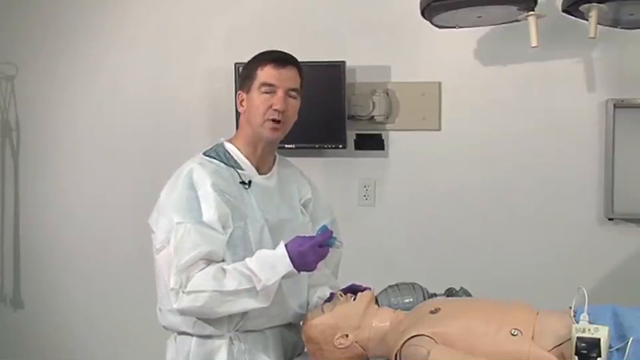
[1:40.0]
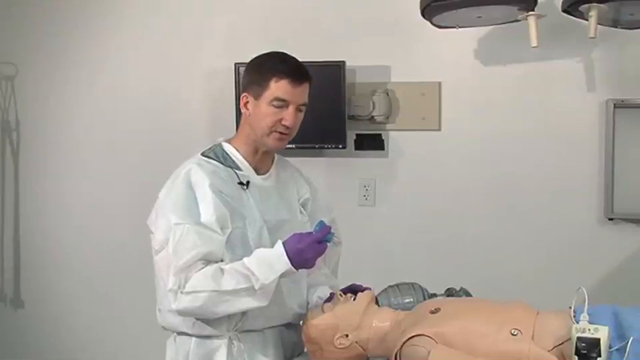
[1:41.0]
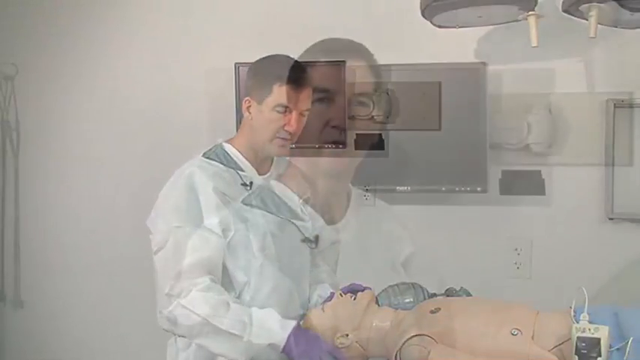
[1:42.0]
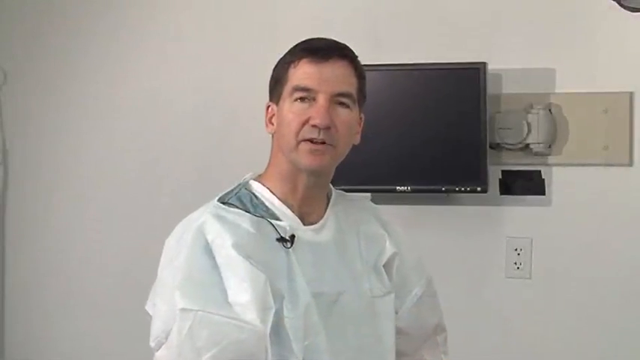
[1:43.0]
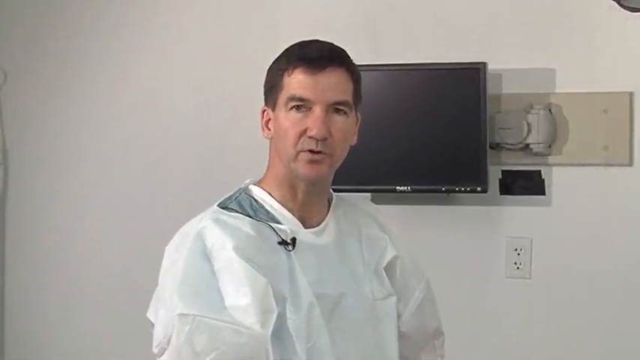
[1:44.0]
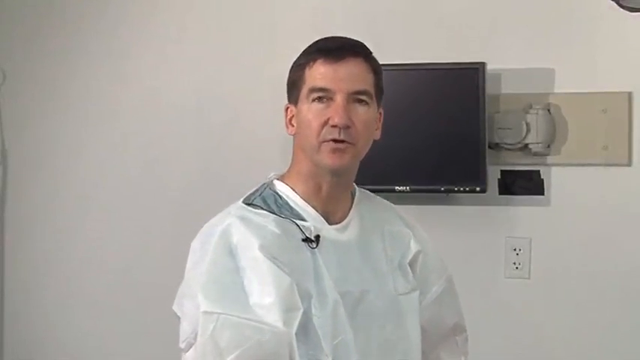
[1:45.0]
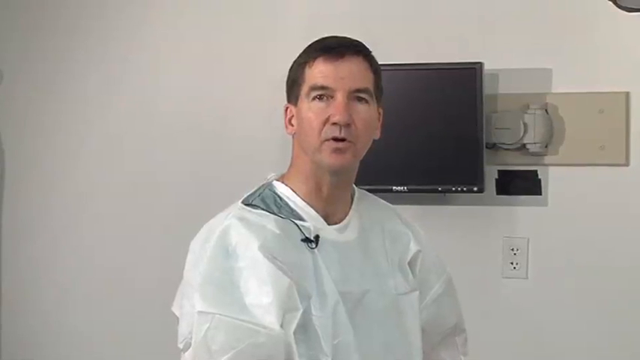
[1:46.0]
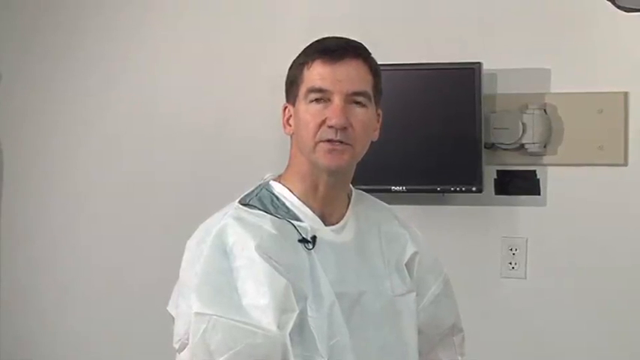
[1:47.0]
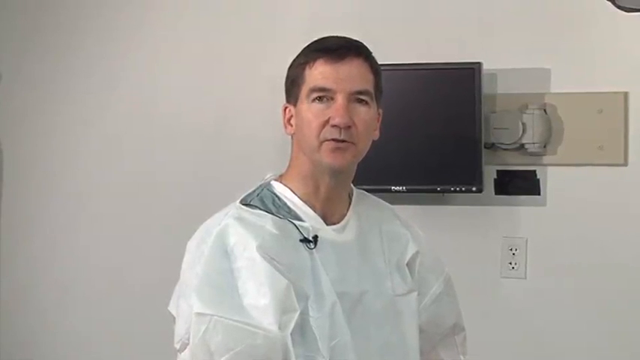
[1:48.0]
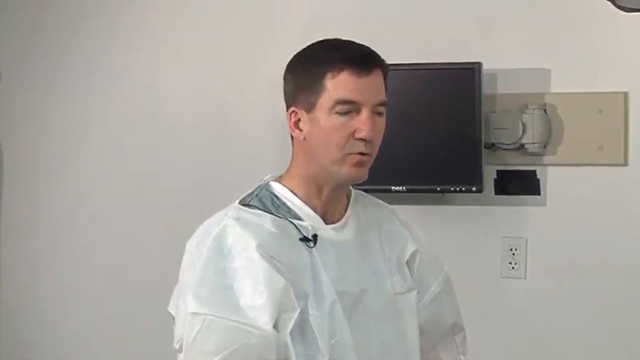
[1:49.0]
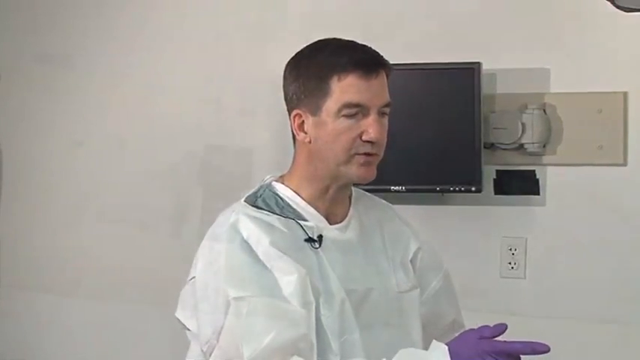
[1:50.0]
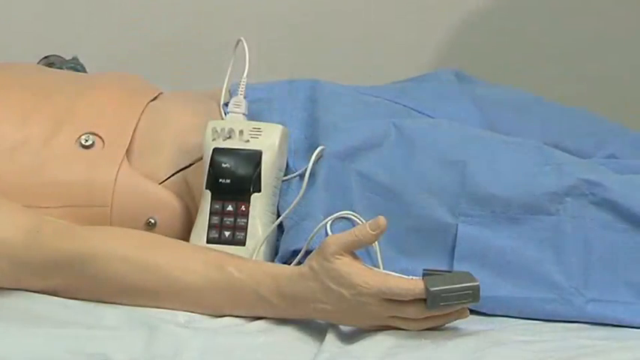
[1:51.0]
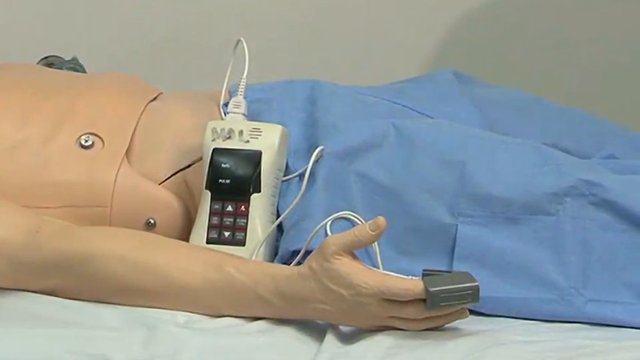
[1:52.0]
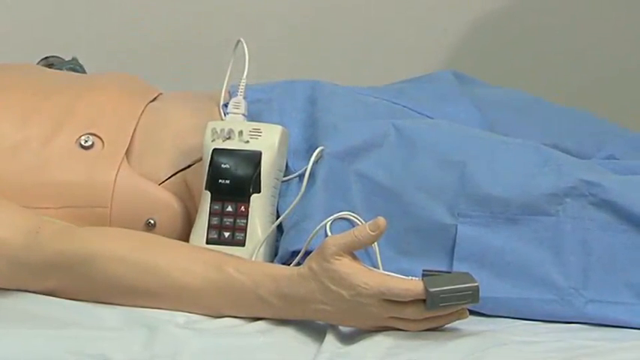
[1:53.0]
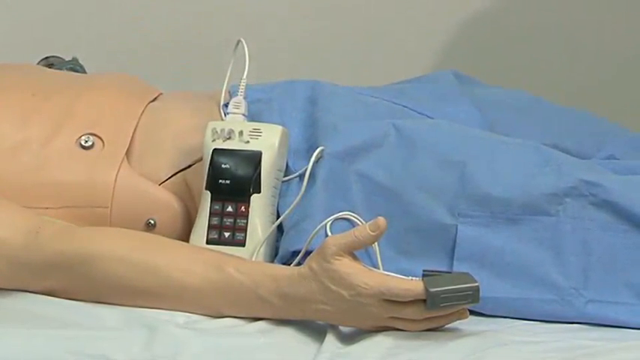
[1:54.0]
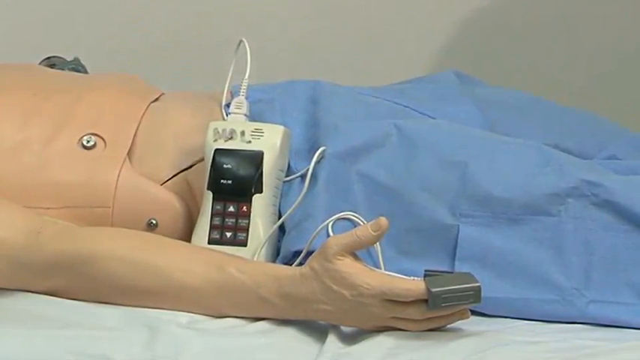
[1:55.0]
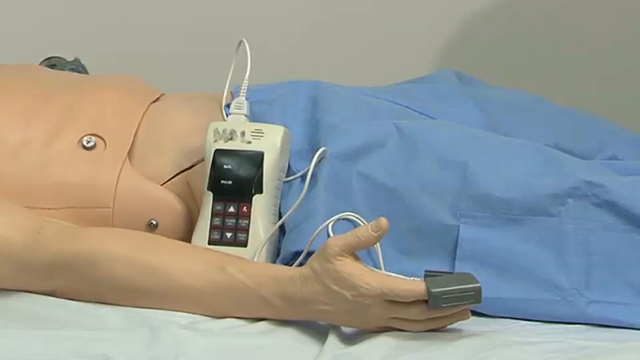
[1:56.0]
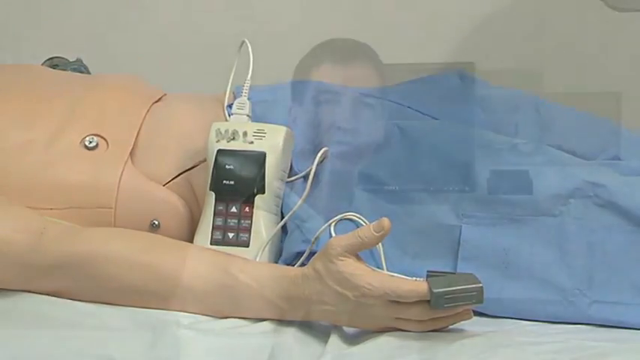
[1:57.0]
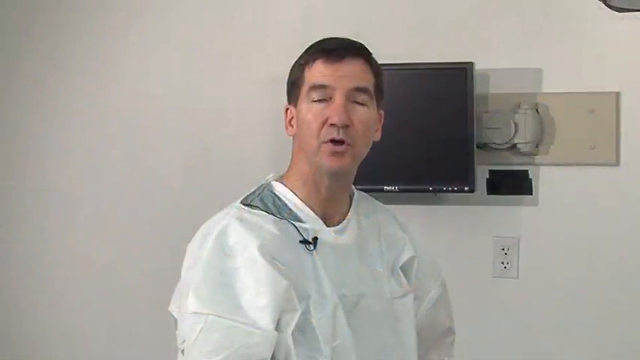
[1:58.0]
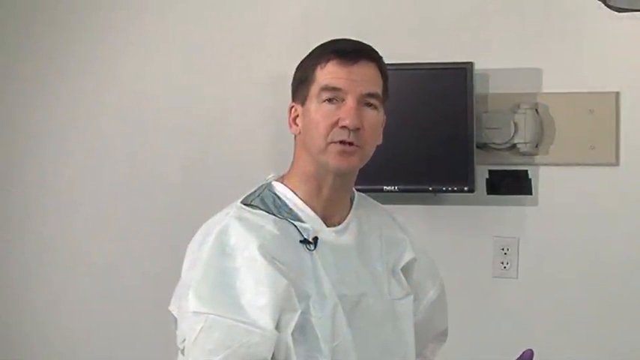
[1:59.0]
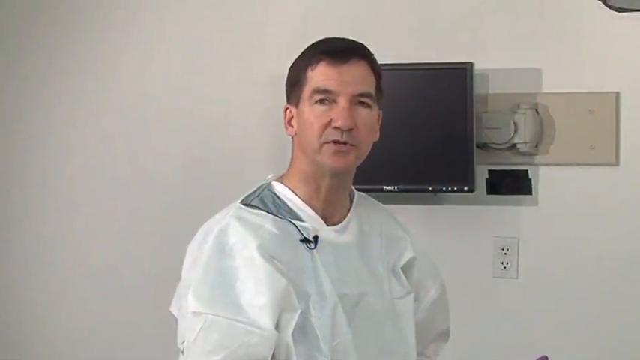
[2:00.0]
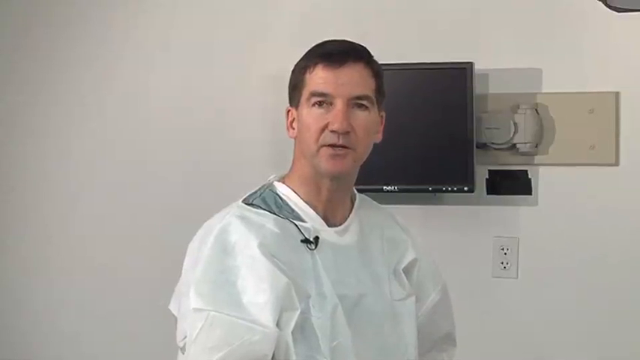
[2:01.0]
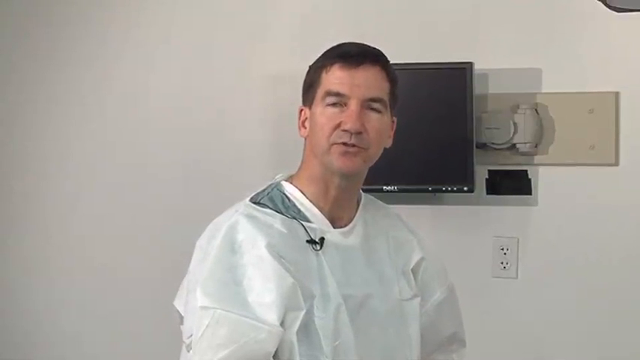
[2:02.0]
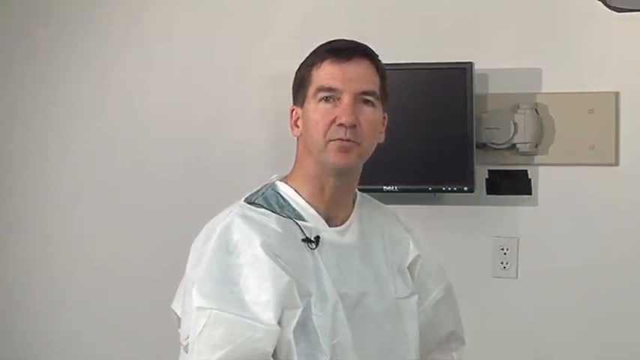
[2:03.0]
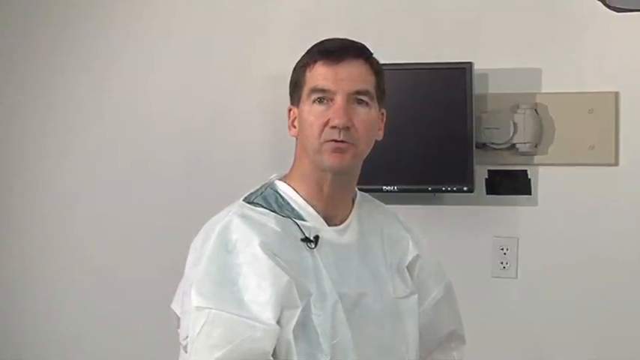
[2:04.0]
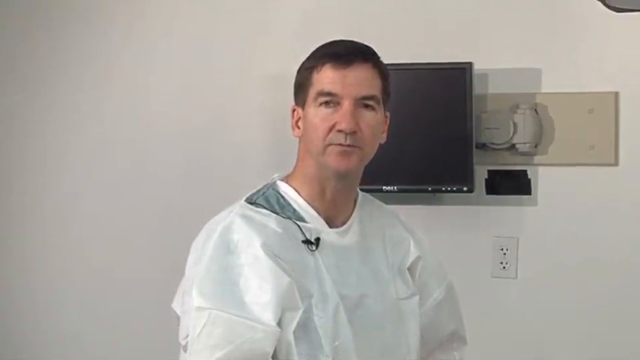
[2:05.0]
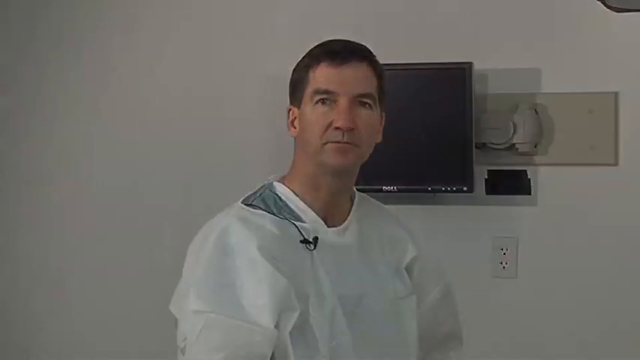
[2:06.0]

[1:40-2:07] A doctor wearing a white gown and purple gloves holds a blue object beside a mannequin lying flat. A piece of equipment is lying next to the mannequin, and some other kind of machinery is lying at the side of the mannequin's waist. The doctor looks at the camera, then looks at the blue object and places it on the table next to the mannequin. A close-up shows the doctor talking to the camera with a Dell screen on the wall behind him, and a microphone is on his shirt. He looks ahead of him, kind of toward the mannequin. The shot then transitions to the lower end of the mannequin, kind of where the waist is, showing some kind of equipment lying next to the mannequin with wires attached to another piece of equipment on the mannequin's finger. The mannequin wears a blue gown. The shot stays there for a period of time before transitioning back to the doctor, who continues to talk and look at the camera.